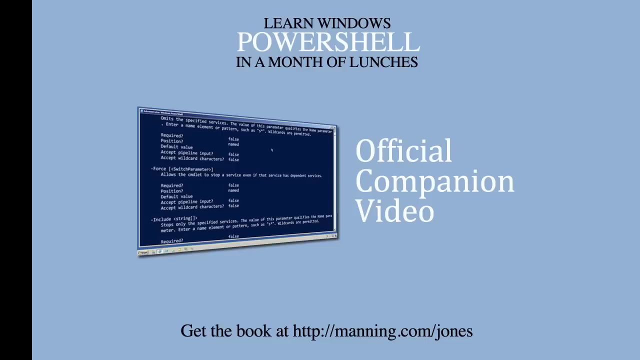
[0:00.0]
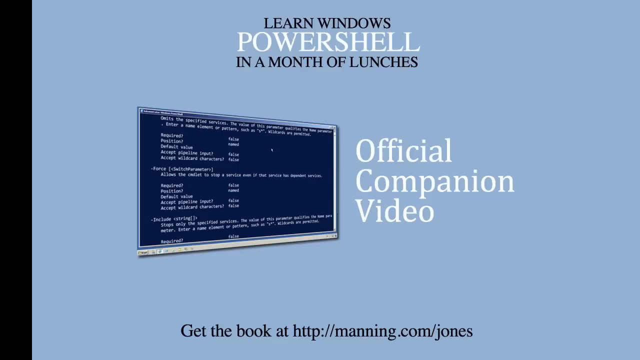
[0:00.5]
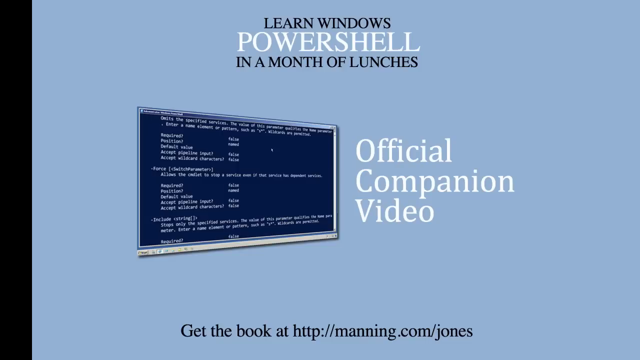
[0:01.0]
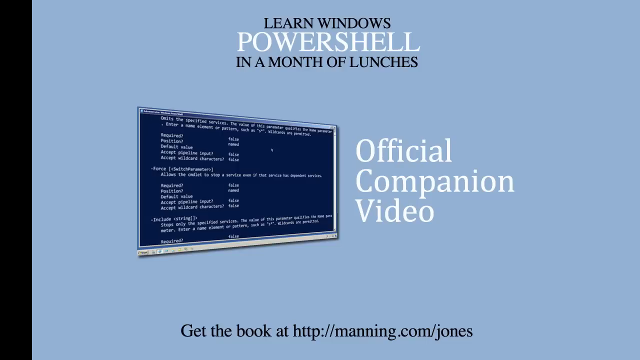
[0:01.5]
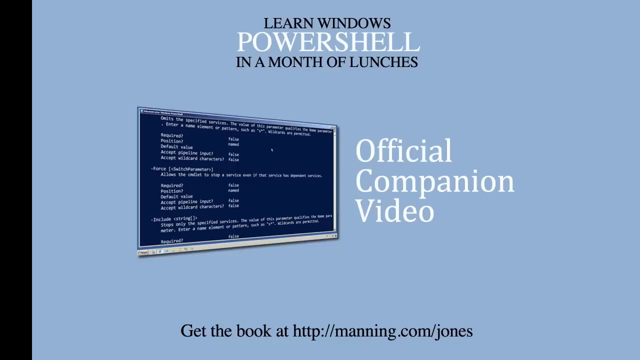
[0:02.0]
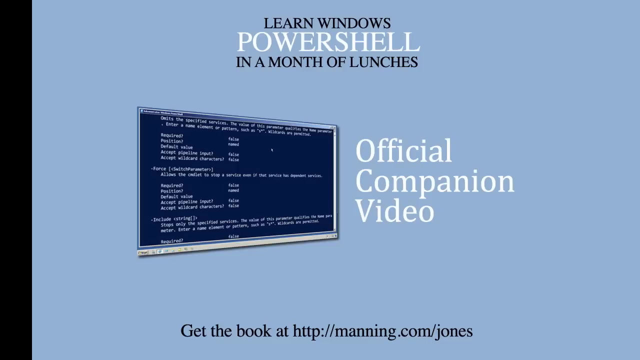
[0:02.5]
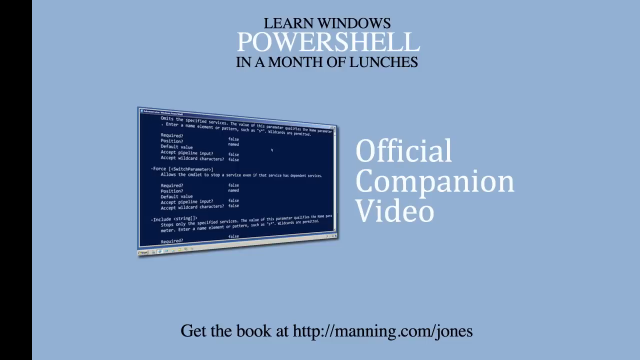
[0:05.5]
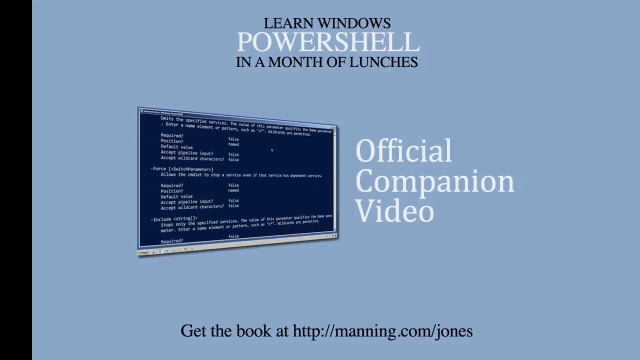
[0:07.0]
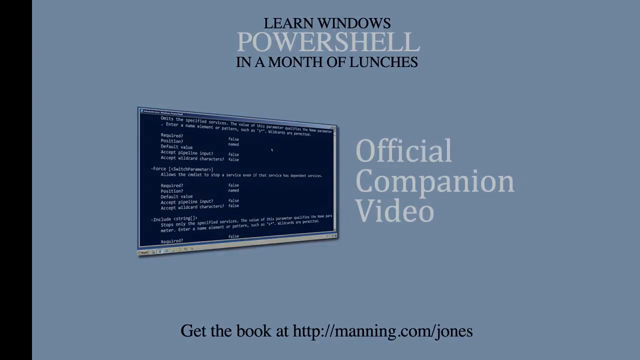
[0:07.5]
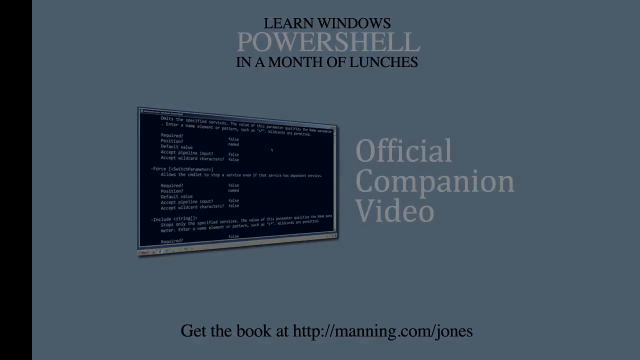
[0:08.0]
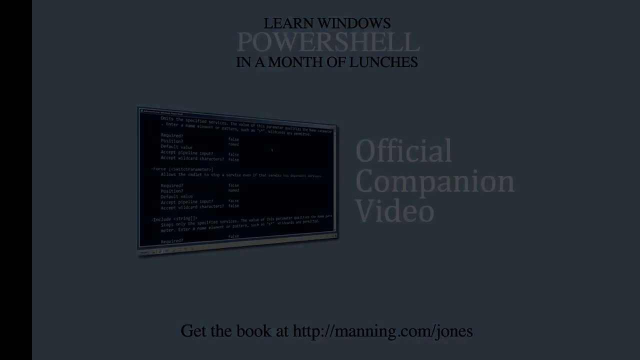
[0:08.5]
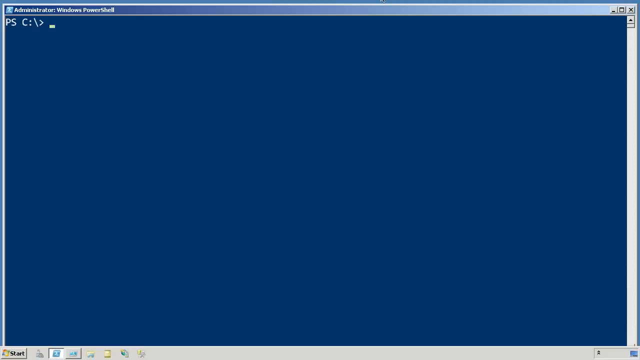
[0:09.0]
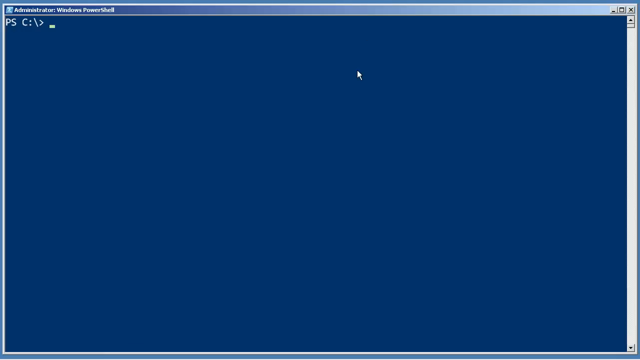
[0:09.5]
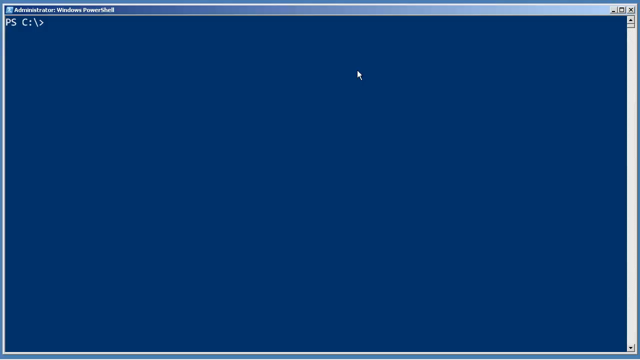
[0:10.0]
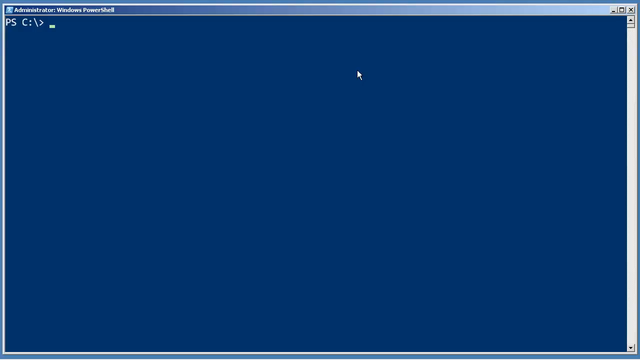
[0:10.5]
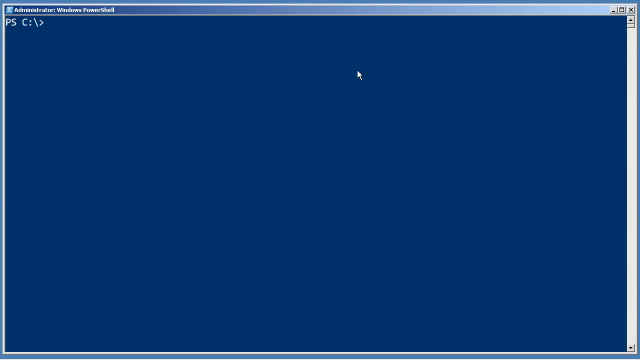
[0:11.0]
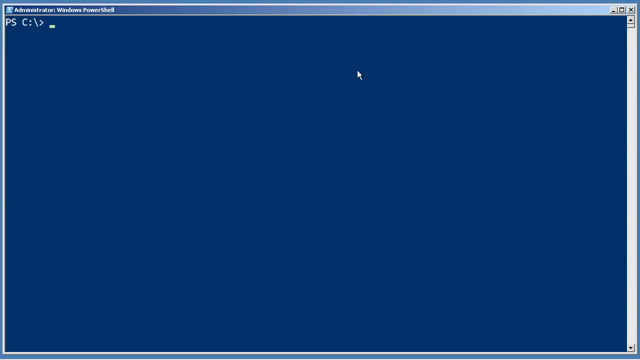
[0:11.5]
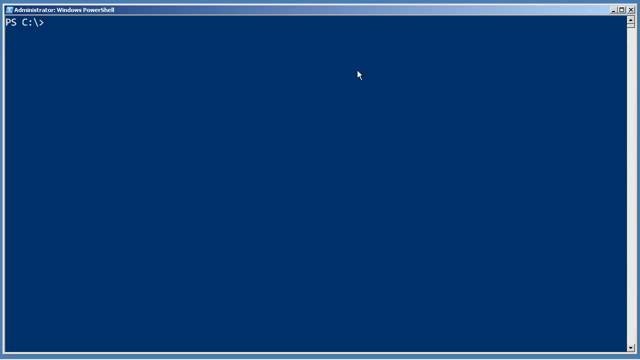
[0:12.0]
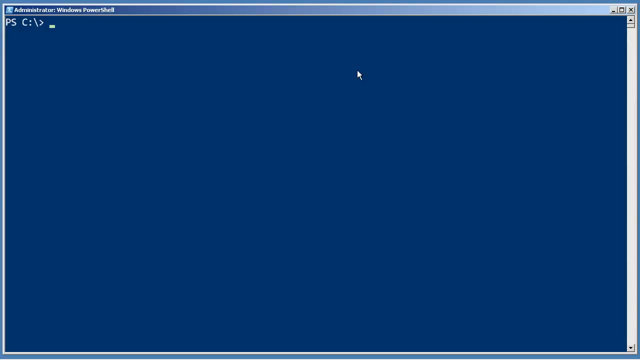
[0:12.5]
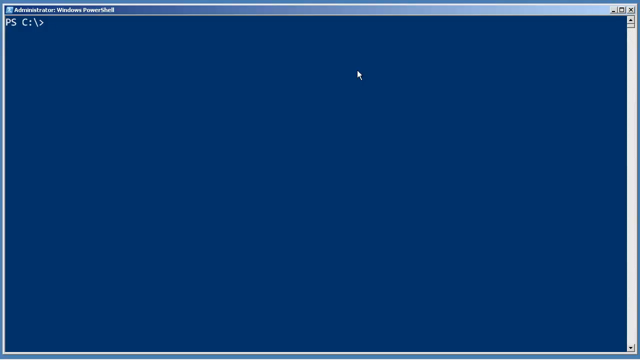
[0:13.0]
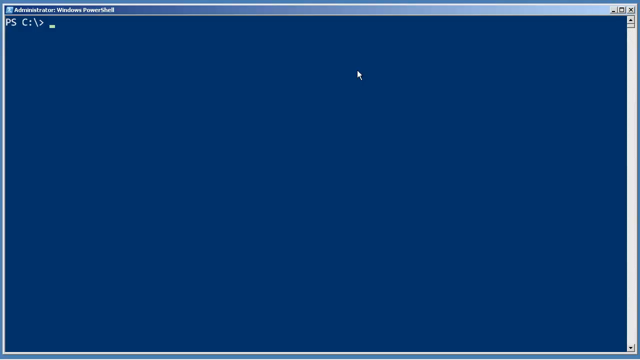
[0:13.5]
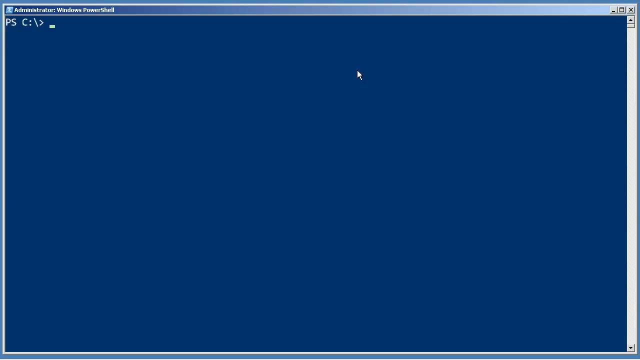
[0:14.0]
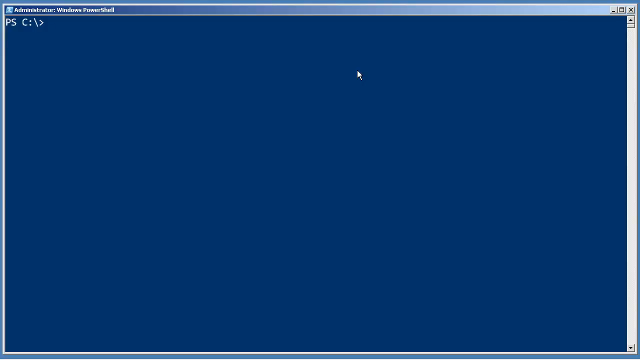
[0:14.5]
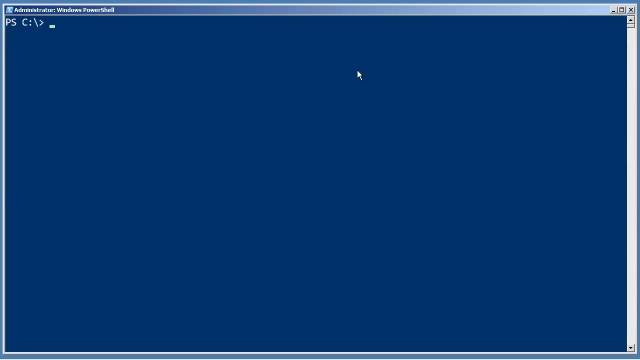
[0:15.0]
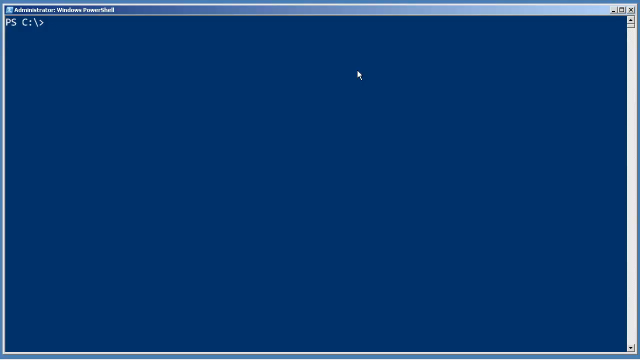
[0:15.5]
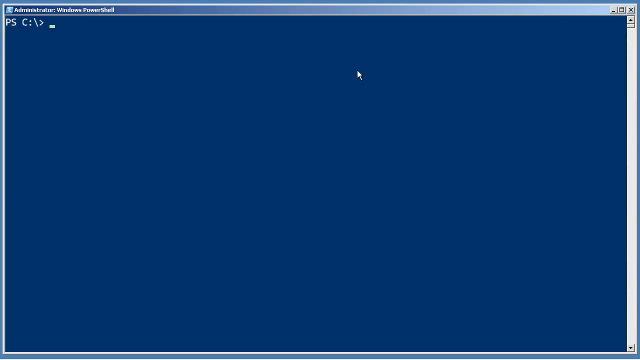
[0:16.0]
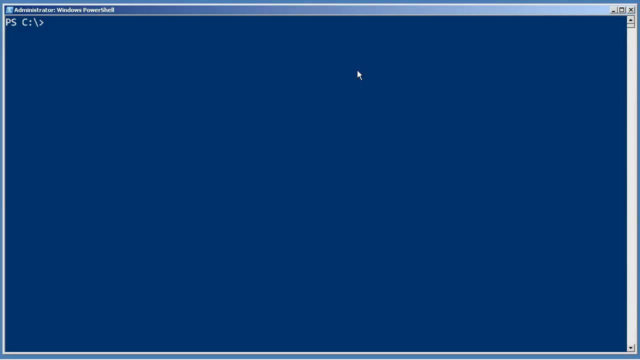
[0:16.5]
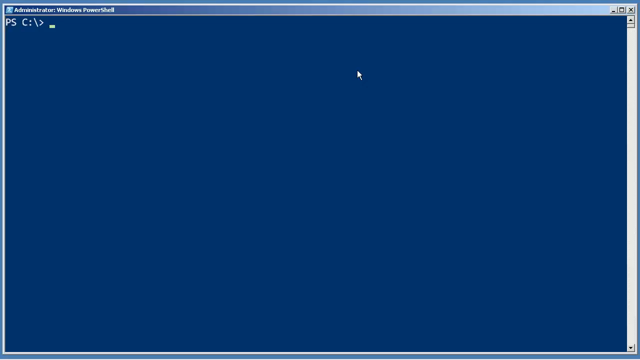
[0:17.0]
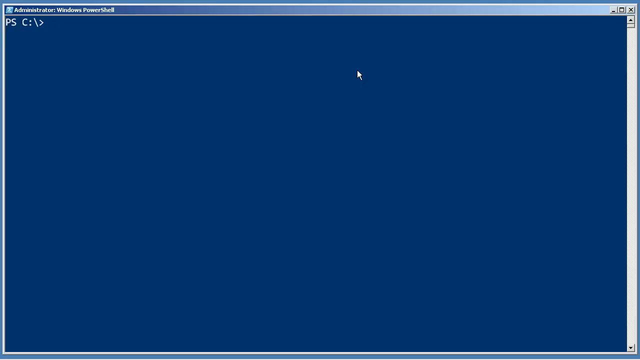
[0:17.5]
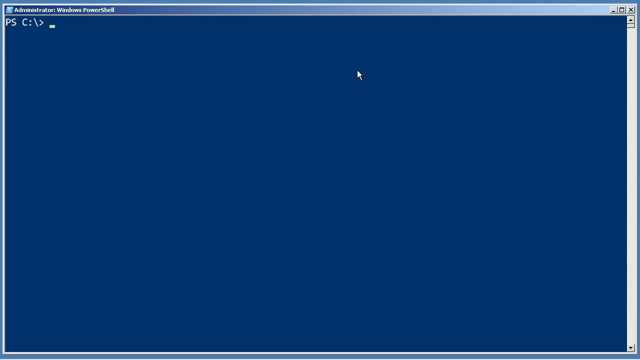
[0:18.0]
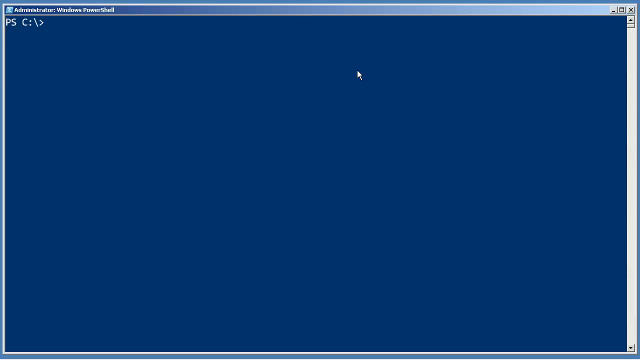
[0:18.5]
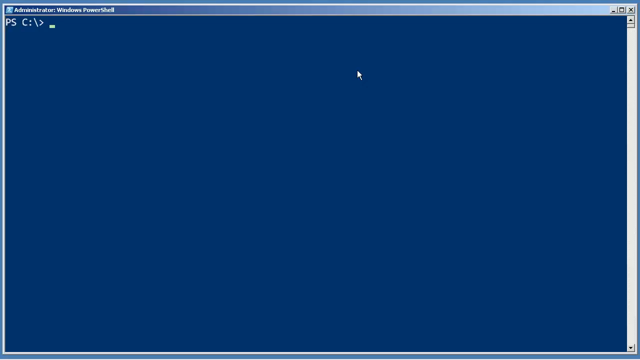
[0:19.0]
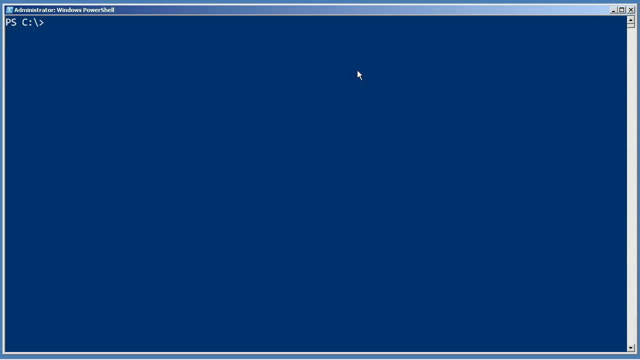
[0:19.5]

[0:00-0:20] The video appears to be an official companion video for how to learn Windows PowerShell in a month of lunches. The background is light blue, and there is an image of some sort of Windows software, apparently PowerShell. Near the center of the screen, slightly to the left, there is a combination of white and black text. At the bottom of the screen it says "get the book at https://mannings.com/.jones", suggesting the video accompanies a book. The screen then changes to a full-screen screen recording of Windows PowerShell: a blue background with white text and a blinking cursor in the top left-hand corner, apparently indicating the software is ready for text input. The cursor keeps blinking for the rest of the shot.